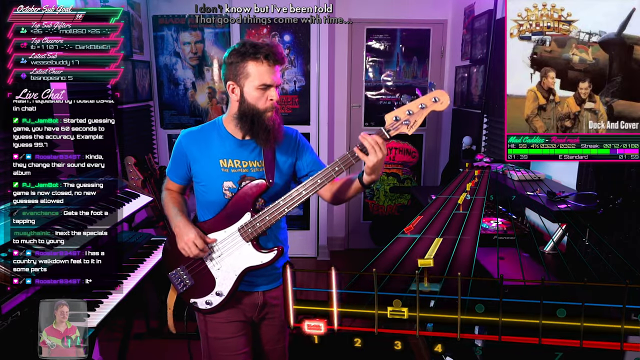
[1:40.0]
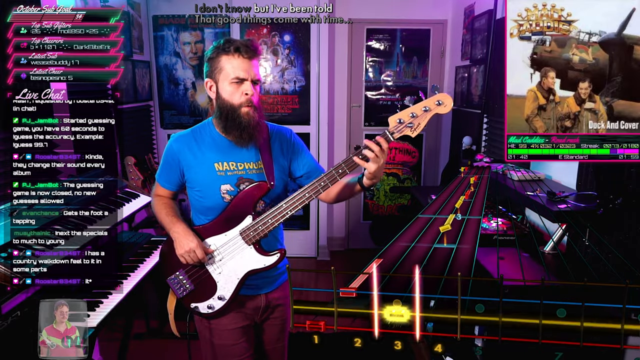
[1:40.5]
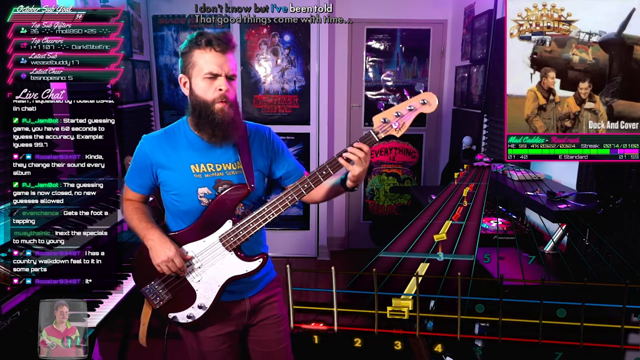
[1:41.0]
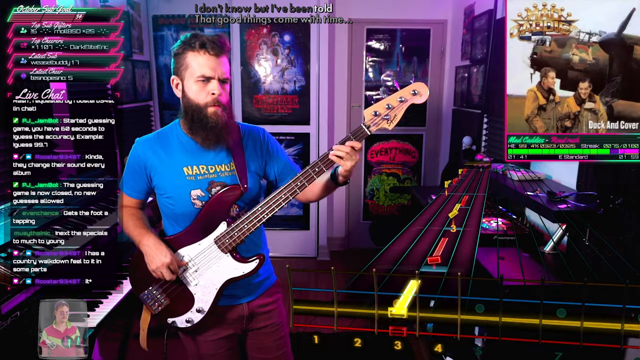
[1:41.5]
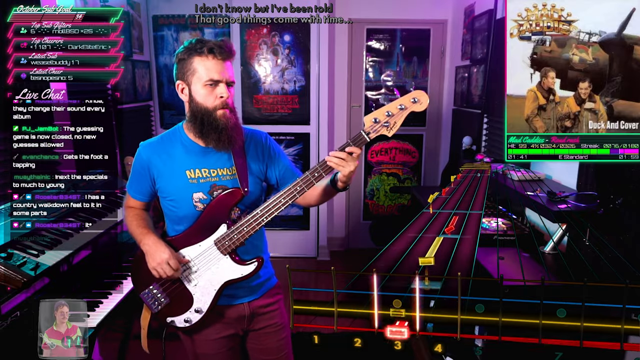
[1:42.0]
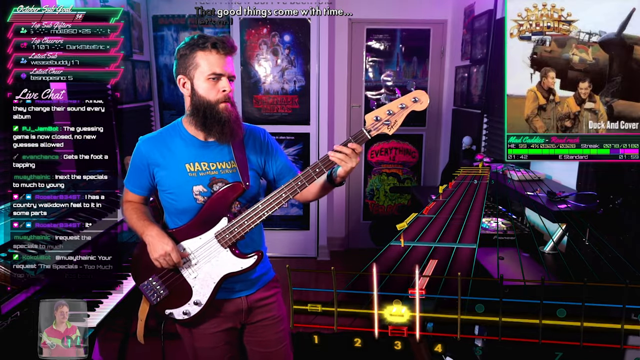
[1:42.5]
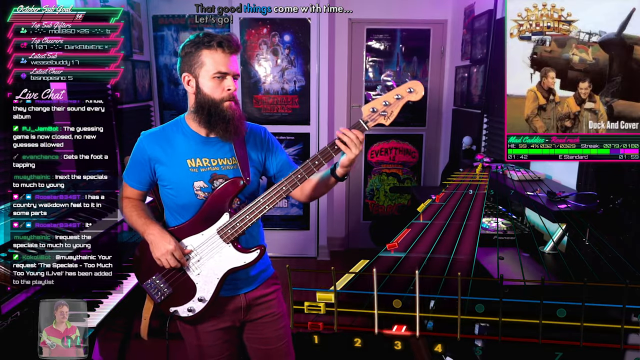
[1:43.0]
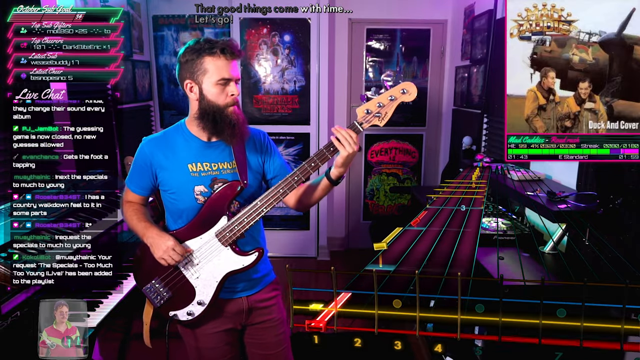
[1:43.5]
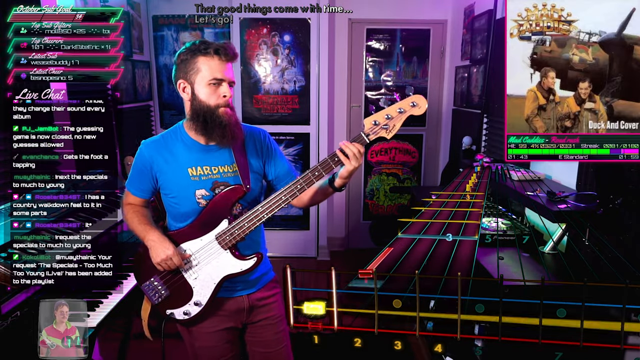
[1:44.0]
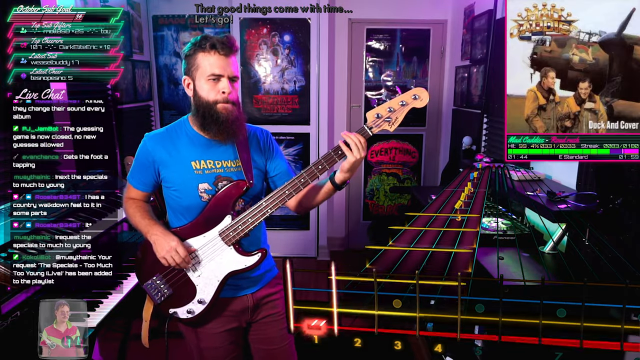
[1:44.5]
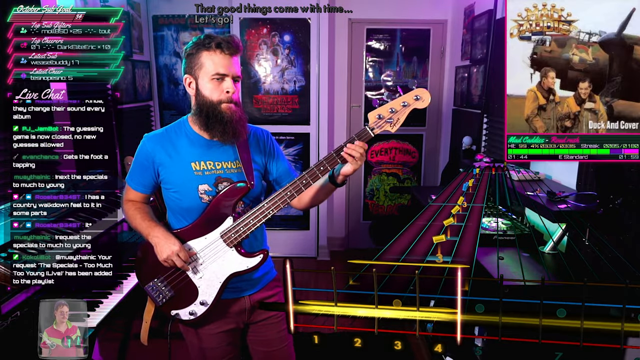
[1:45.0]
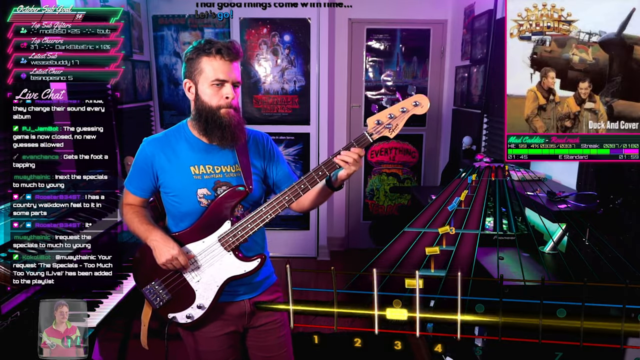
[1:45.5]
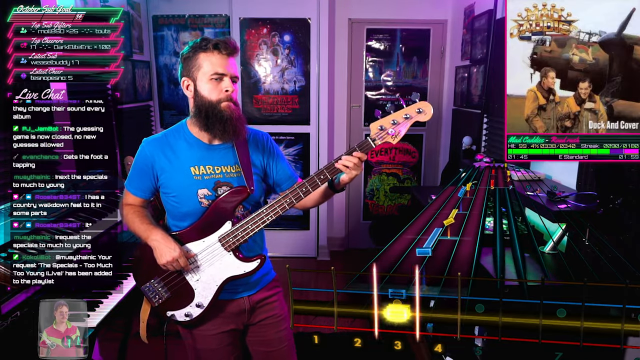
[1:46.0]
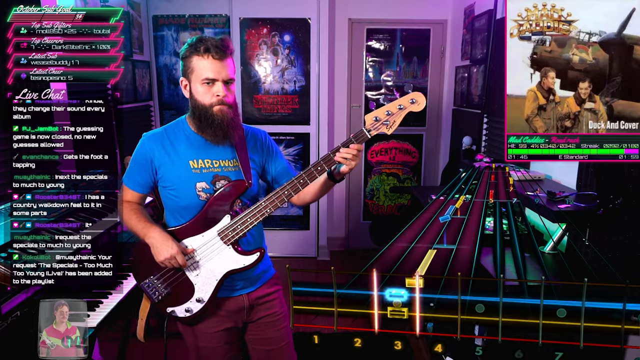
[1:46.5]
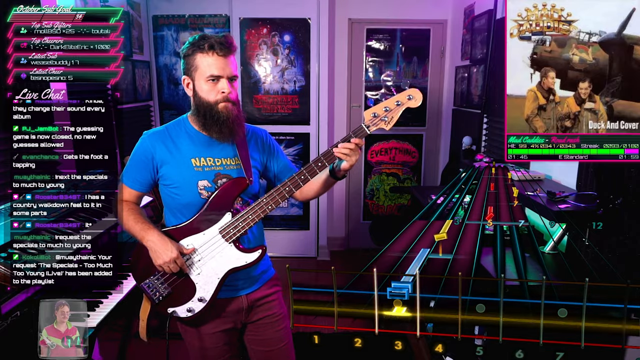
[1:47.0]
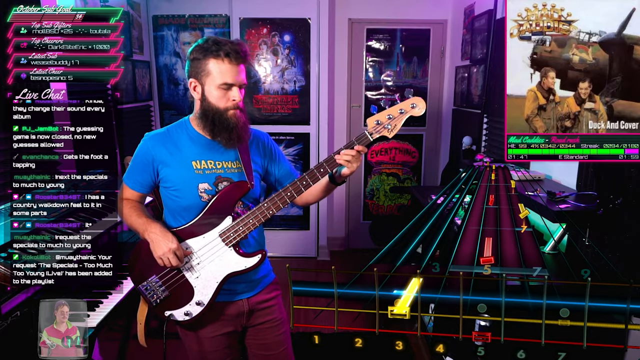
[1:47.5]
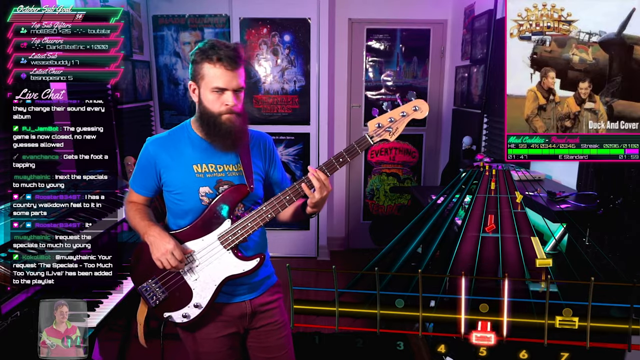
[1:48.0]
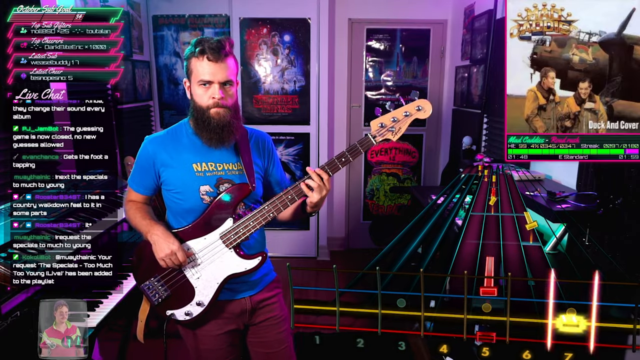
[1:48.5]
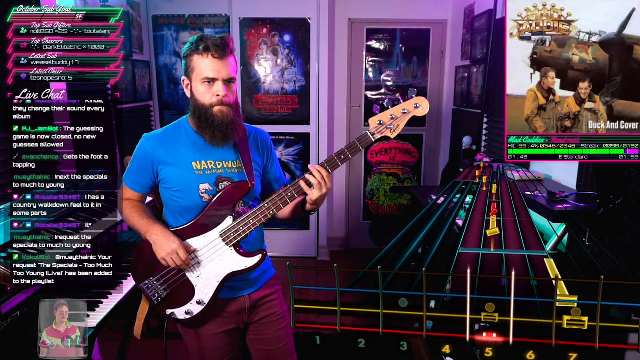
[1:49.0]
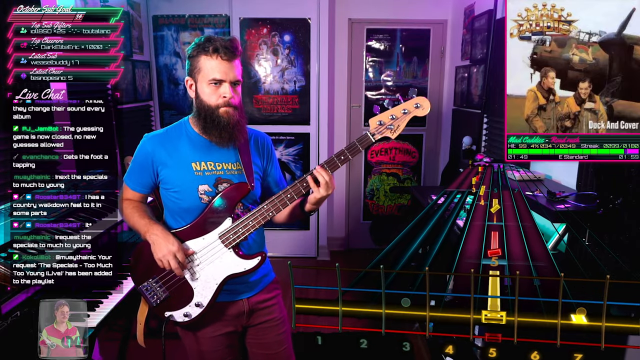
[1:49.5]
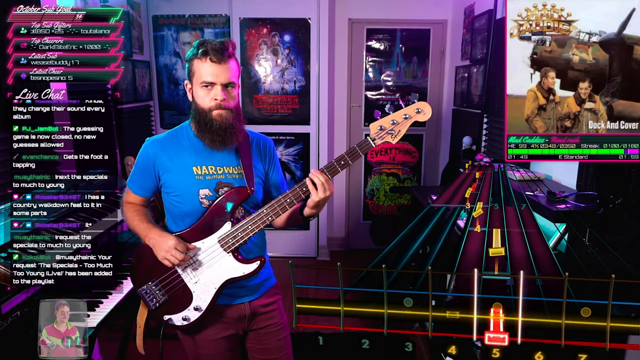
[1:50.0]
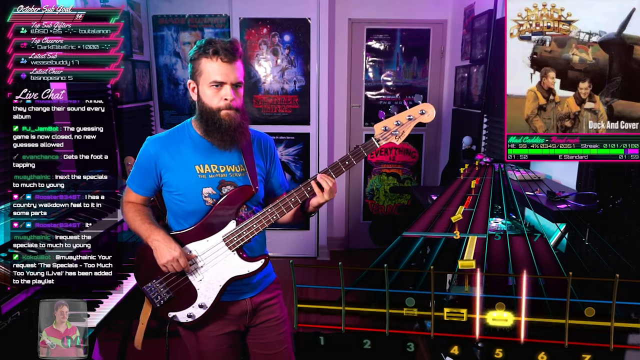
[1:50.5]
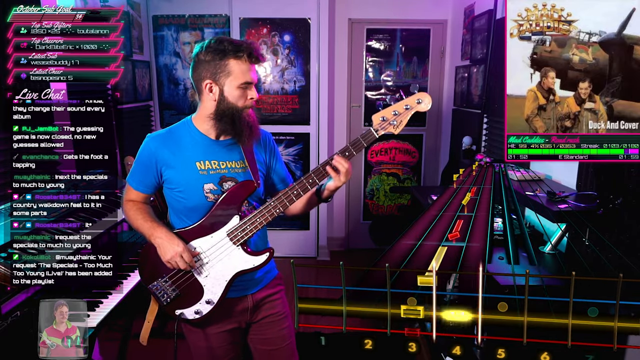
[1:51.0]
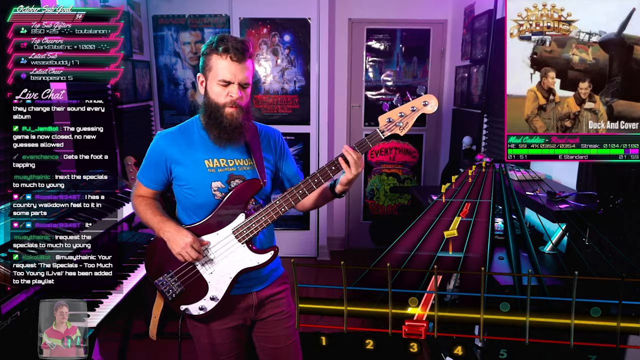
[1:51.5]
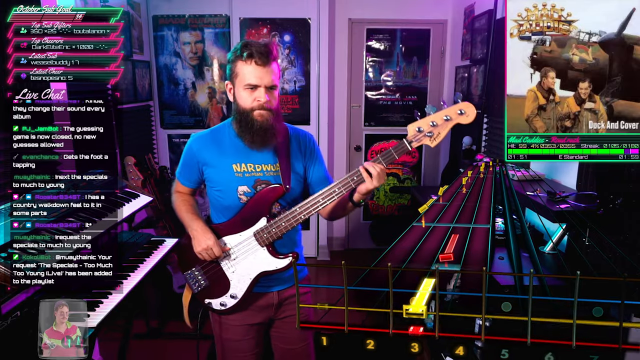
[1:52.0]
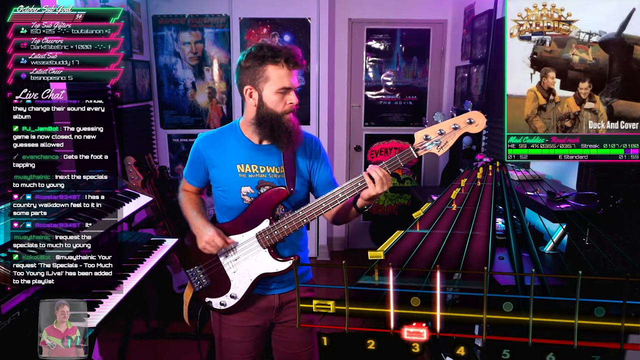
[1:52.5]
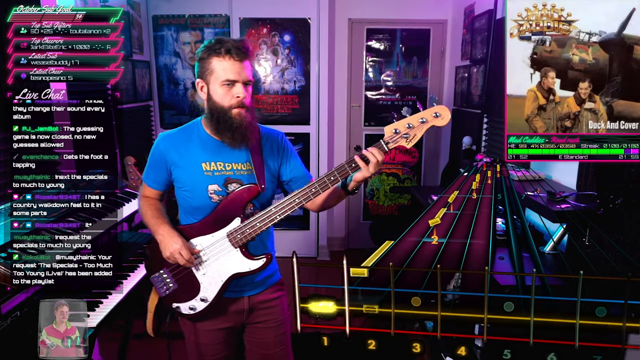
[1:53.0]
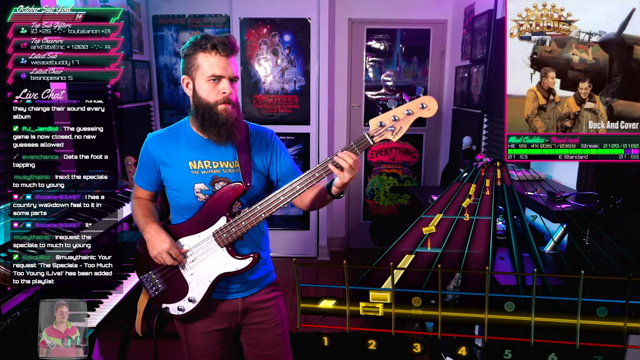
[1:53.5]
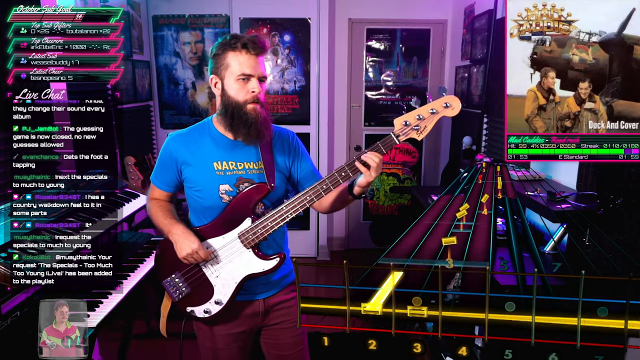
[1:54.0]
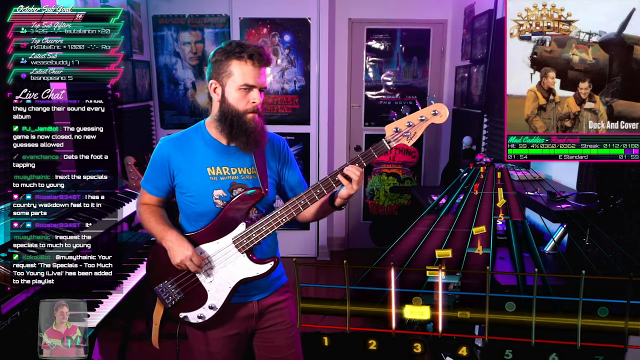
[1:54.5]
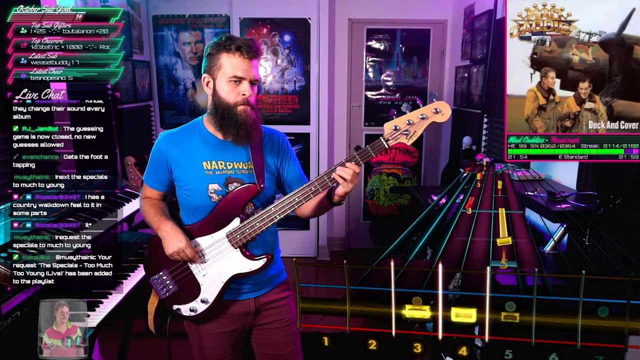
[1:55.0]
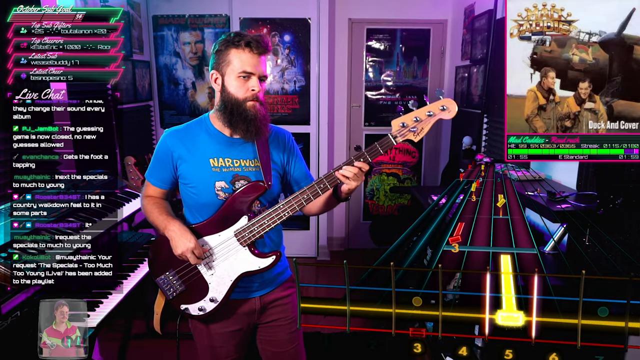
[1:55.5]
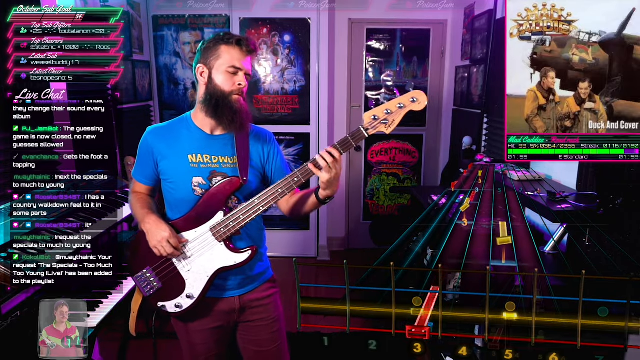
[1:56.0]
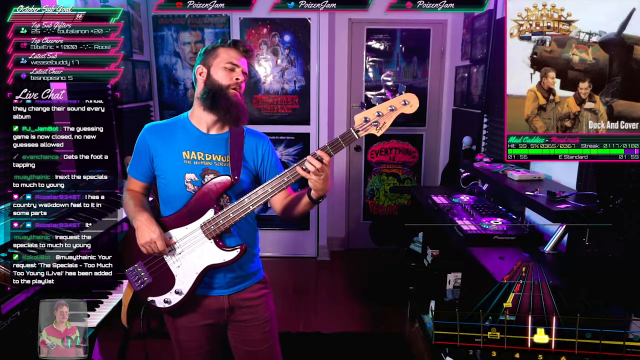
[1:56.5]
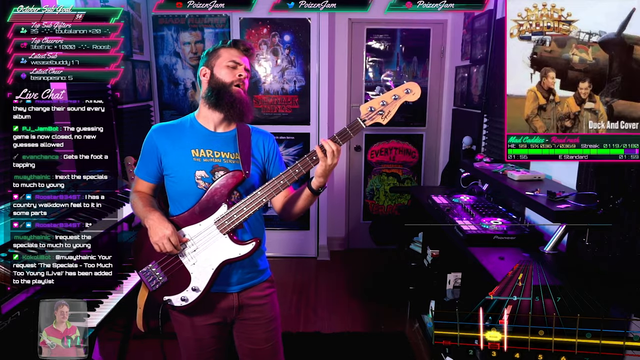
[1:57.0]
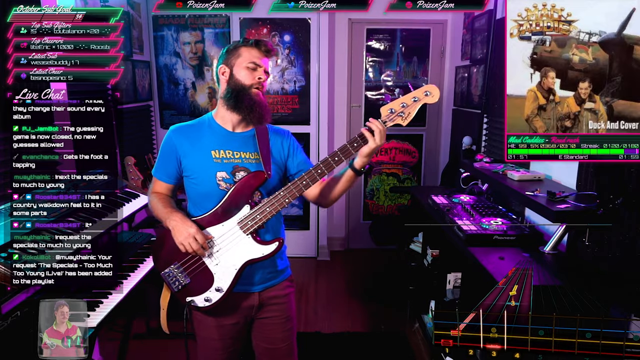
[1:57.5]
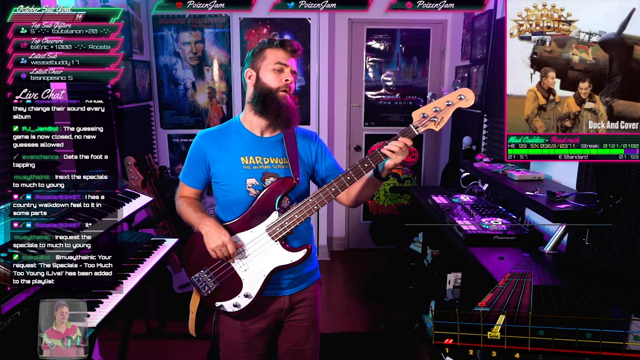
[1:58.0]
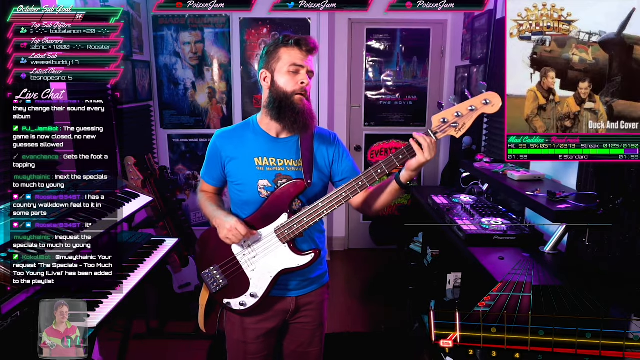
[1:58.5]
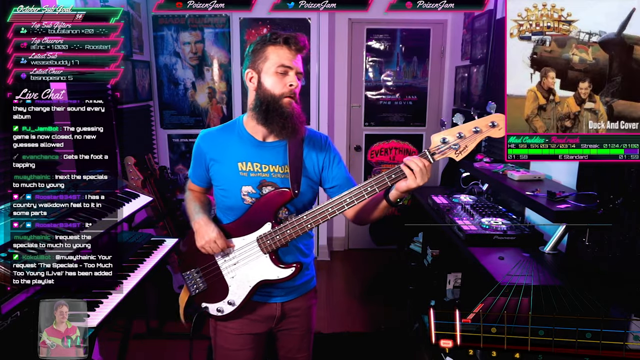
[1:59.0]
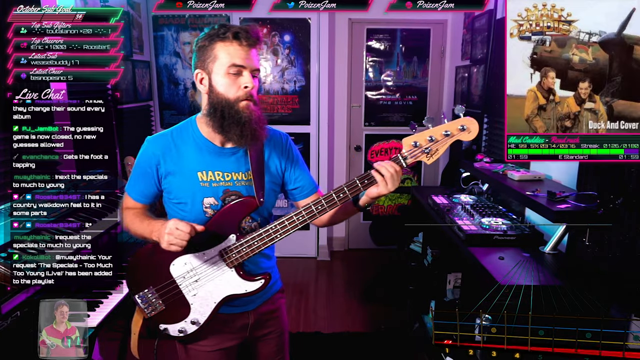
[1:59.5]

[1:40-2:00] With the same background, he finishes the song, his body language showing him getting really into the end. The live chat is less active than before; at least one person is requesting other songs or saying they are adding this song to their playlist, while others say random things, talk about the album, and mention things he is physically doing, such as the foot tapping. He is not really interacting with the chat.